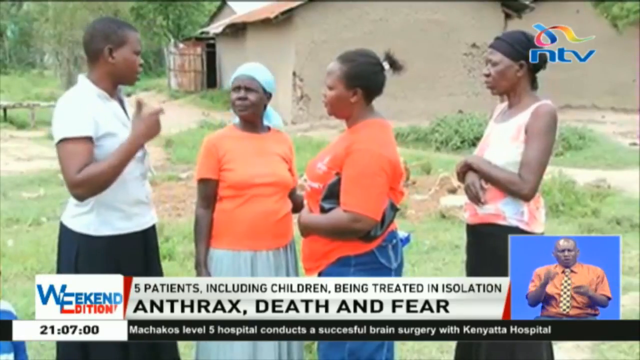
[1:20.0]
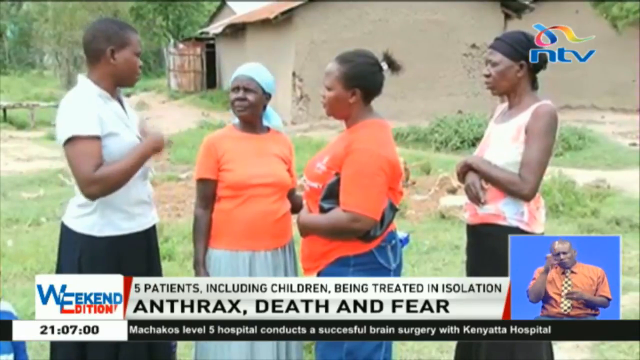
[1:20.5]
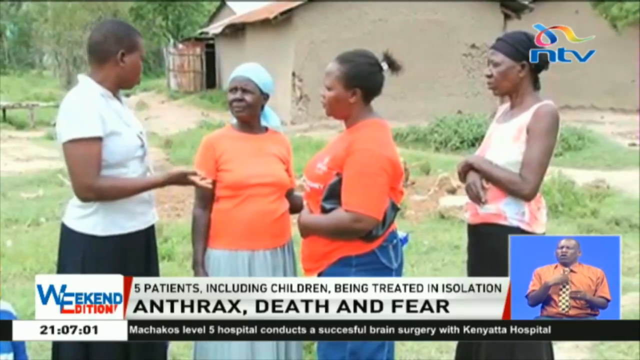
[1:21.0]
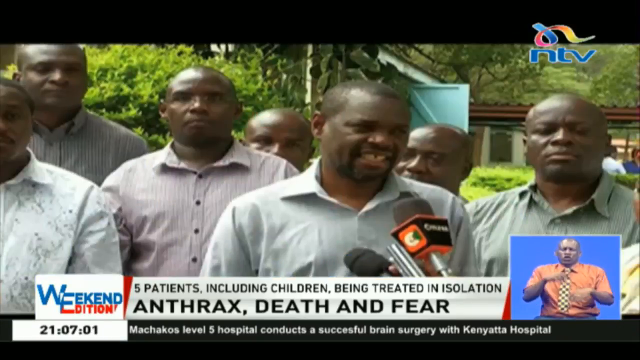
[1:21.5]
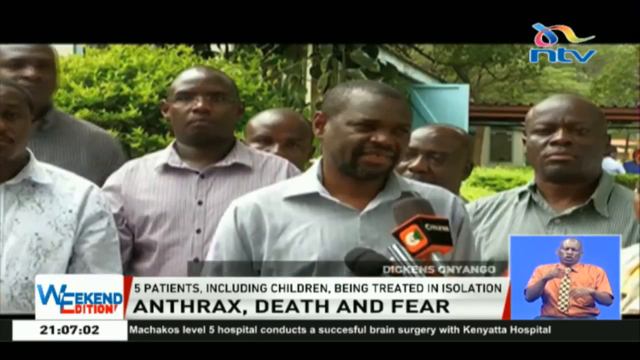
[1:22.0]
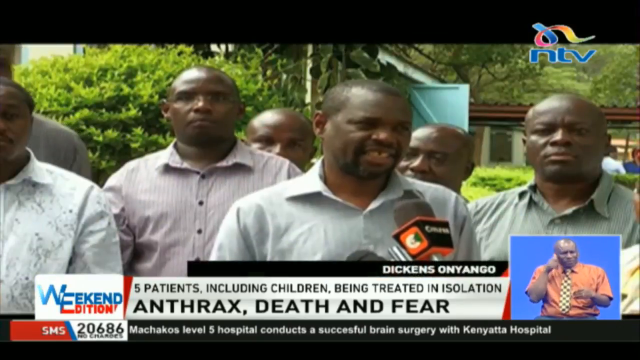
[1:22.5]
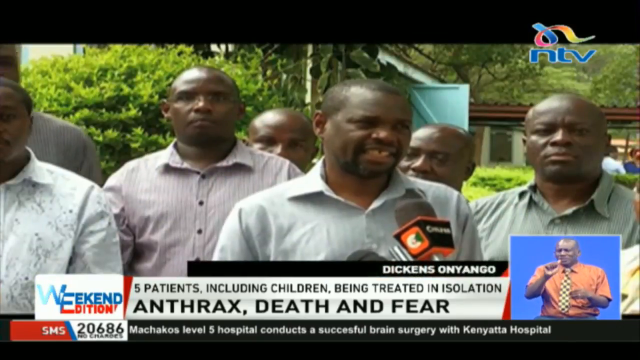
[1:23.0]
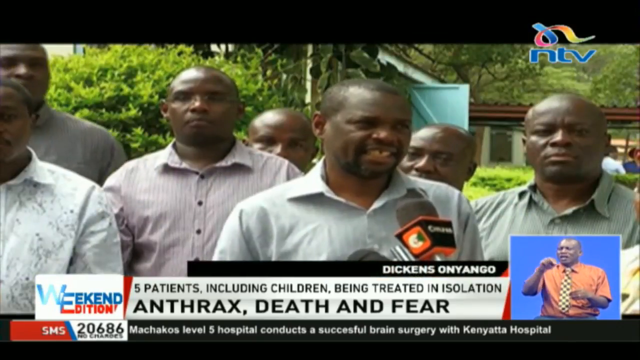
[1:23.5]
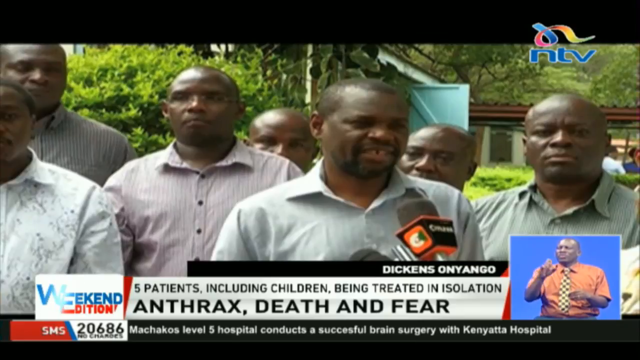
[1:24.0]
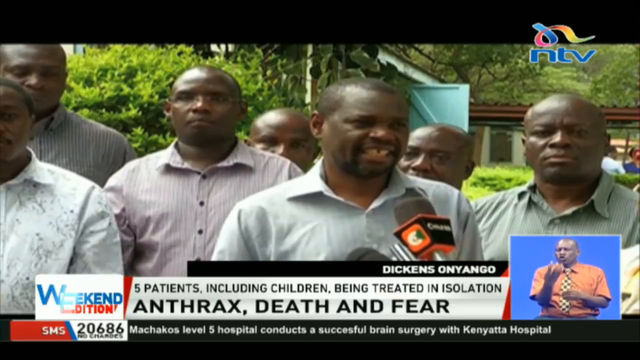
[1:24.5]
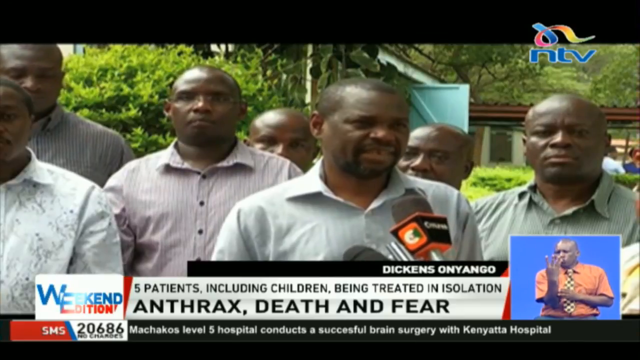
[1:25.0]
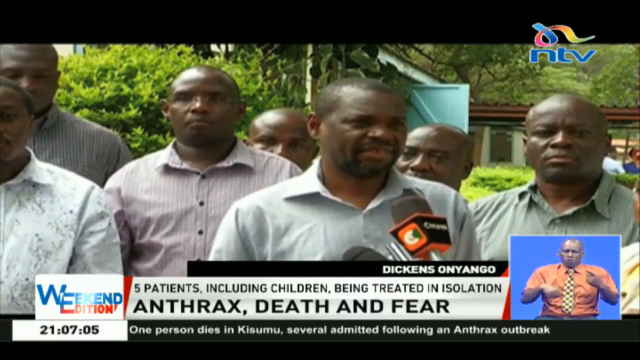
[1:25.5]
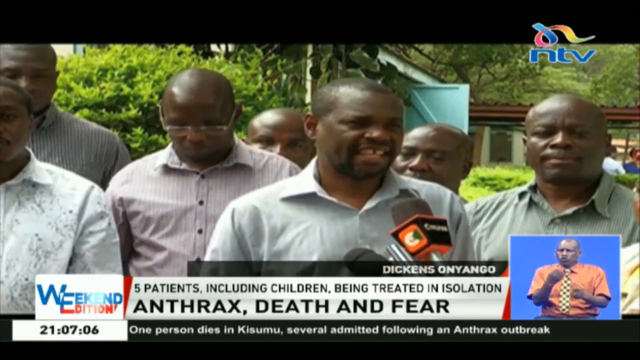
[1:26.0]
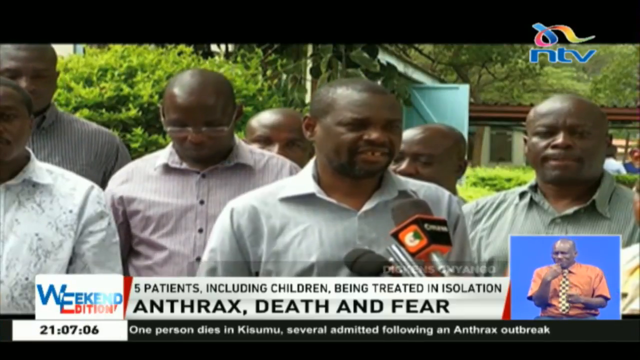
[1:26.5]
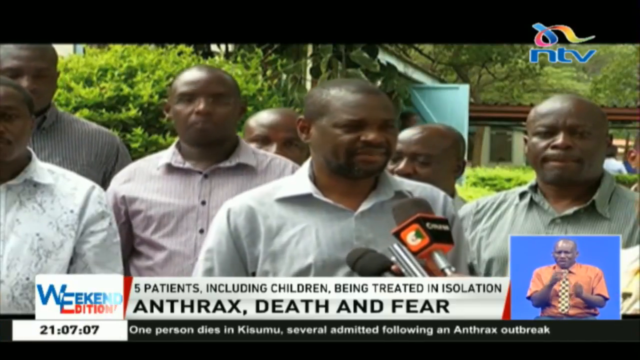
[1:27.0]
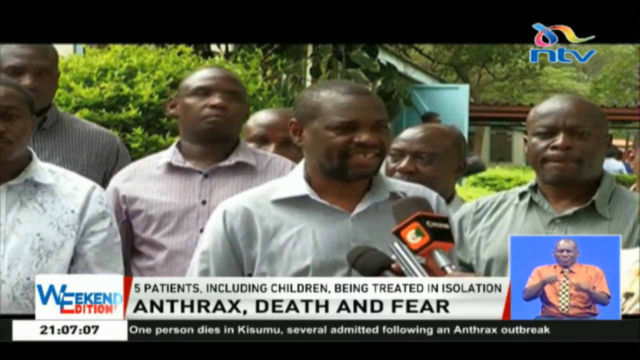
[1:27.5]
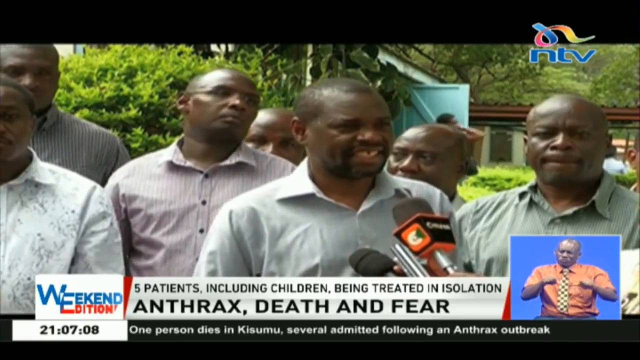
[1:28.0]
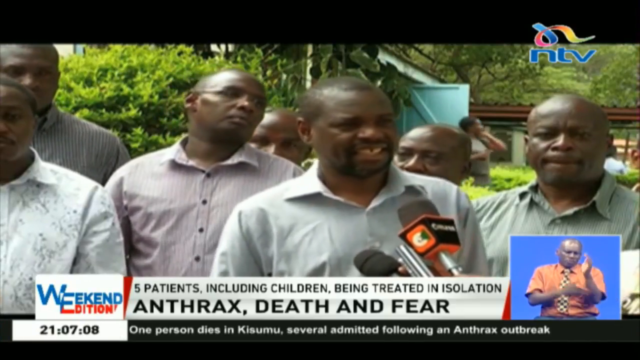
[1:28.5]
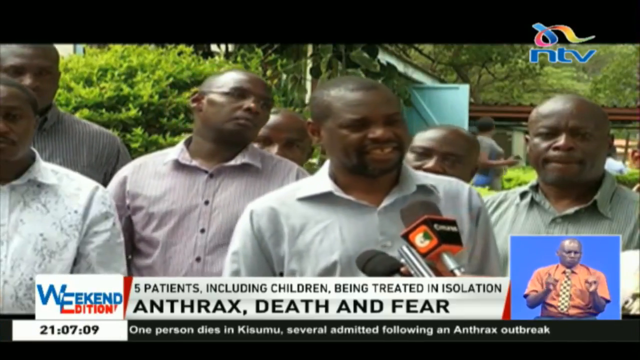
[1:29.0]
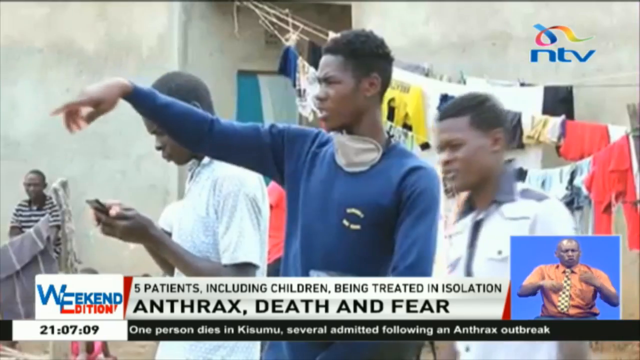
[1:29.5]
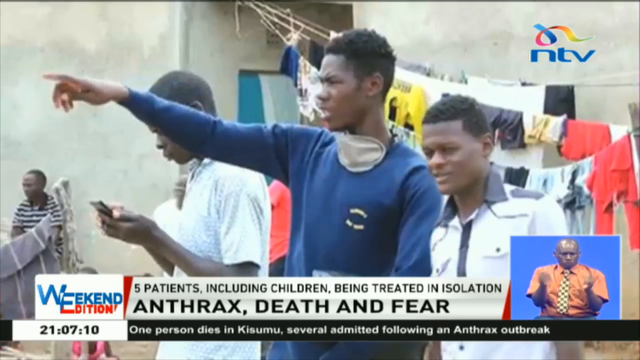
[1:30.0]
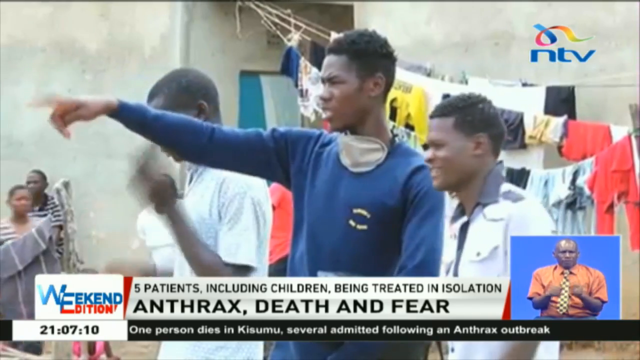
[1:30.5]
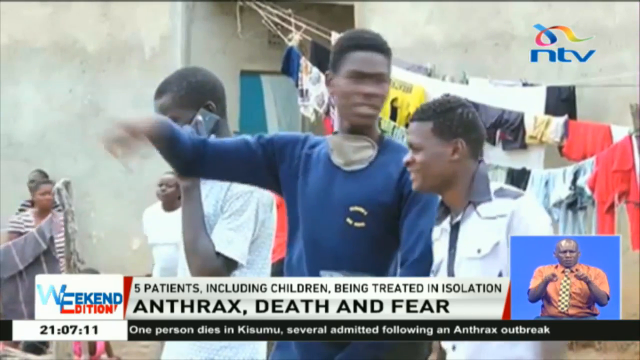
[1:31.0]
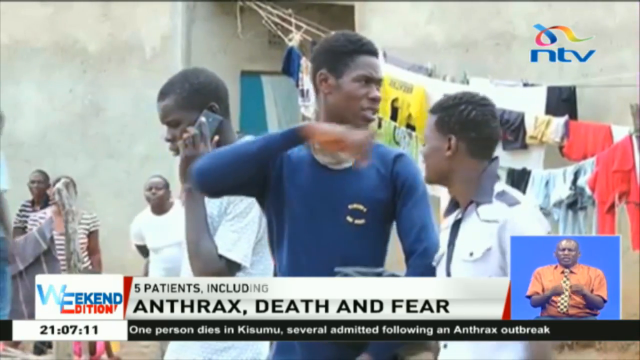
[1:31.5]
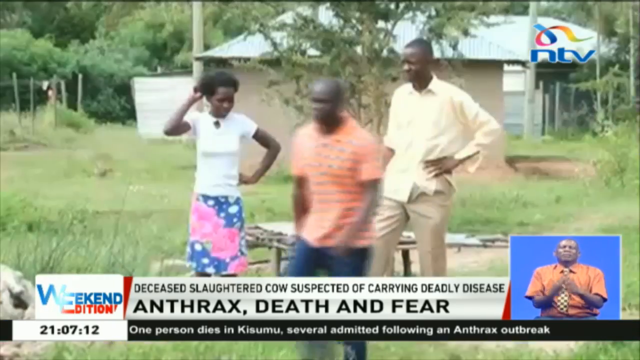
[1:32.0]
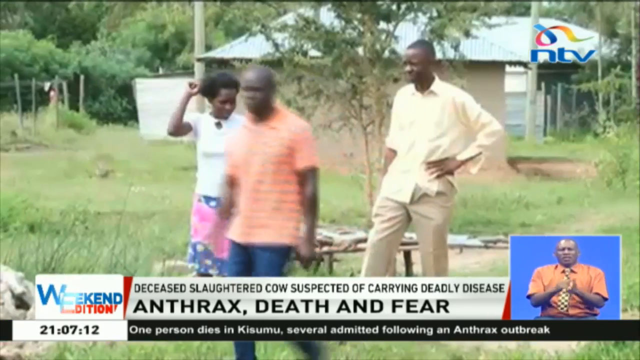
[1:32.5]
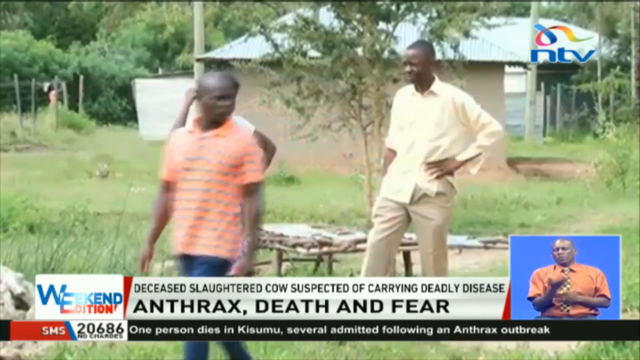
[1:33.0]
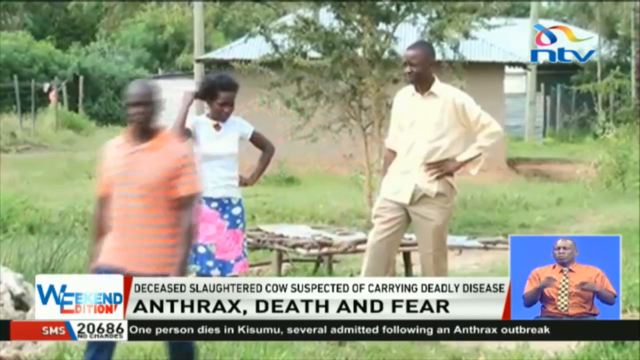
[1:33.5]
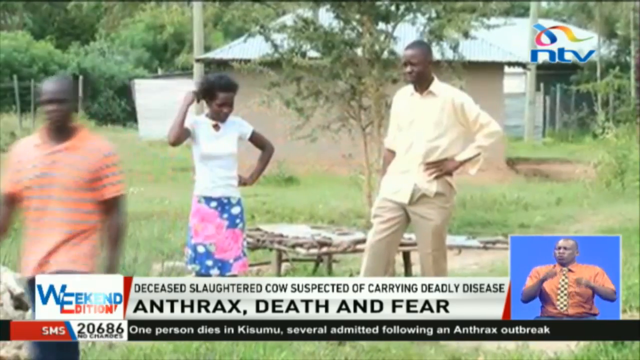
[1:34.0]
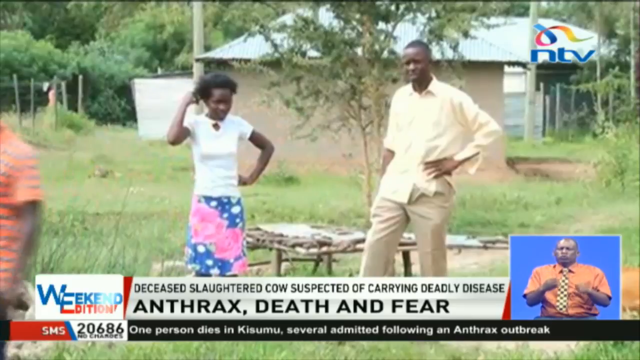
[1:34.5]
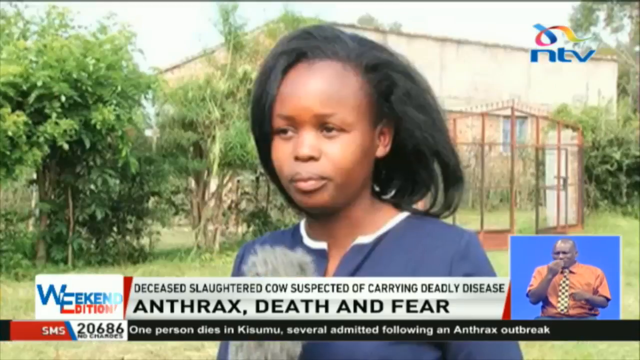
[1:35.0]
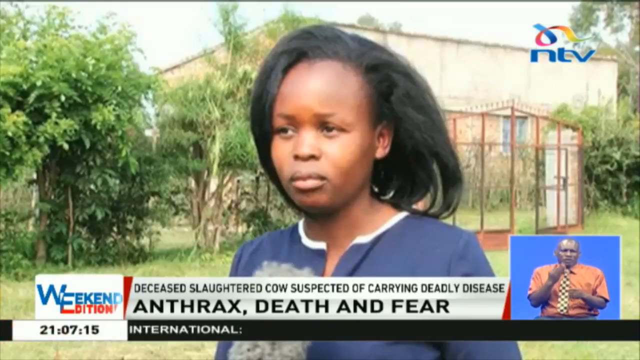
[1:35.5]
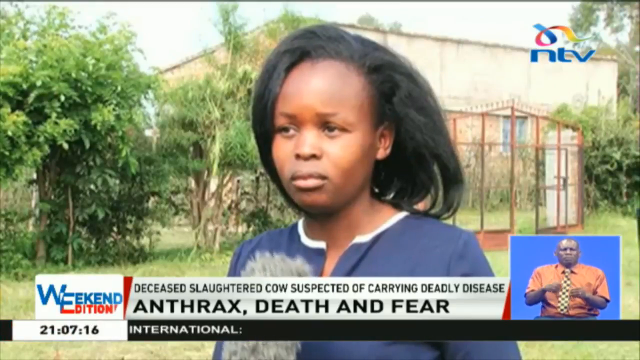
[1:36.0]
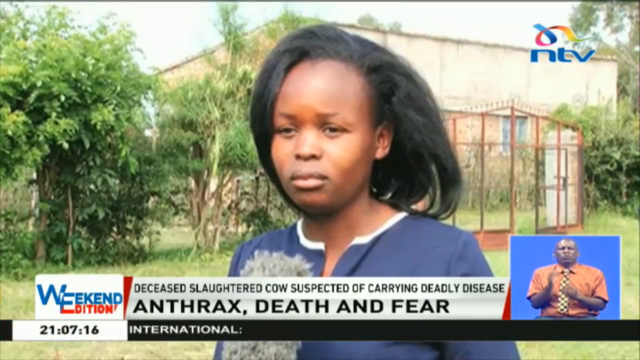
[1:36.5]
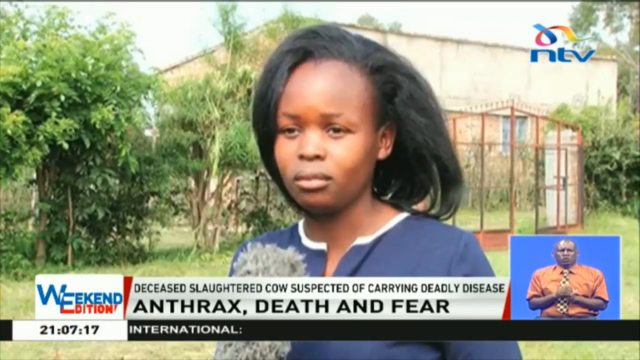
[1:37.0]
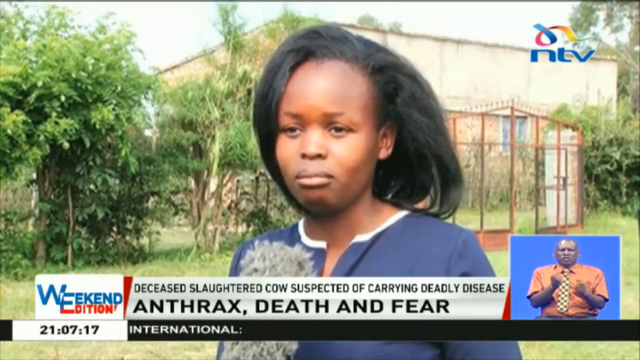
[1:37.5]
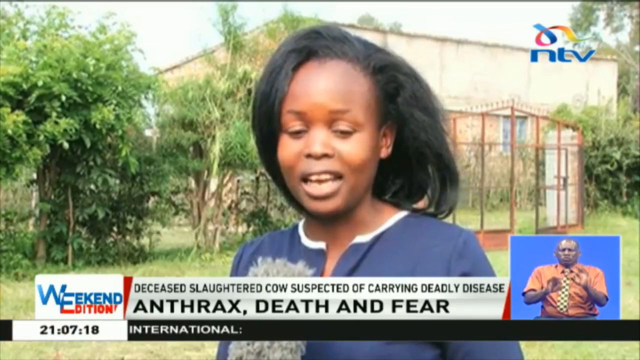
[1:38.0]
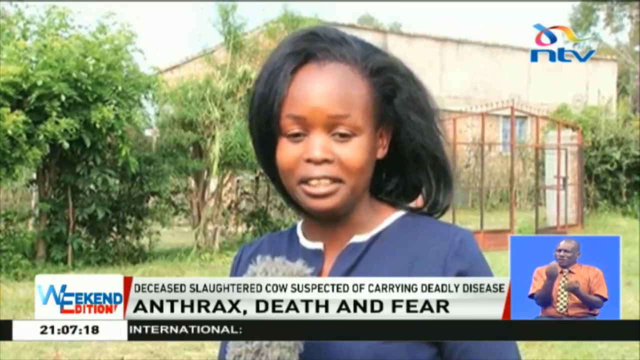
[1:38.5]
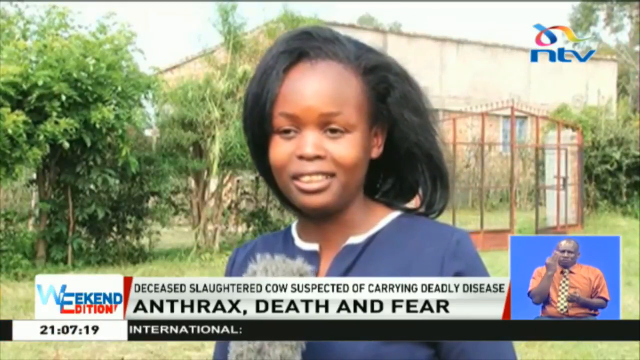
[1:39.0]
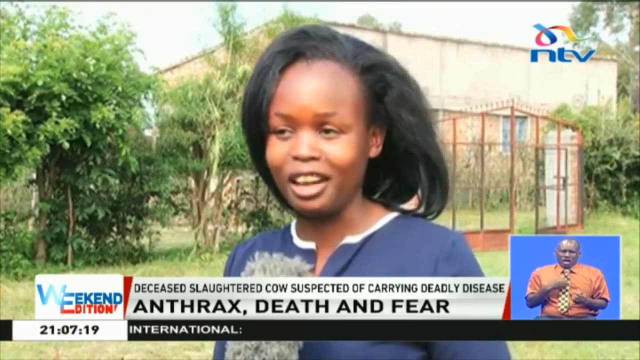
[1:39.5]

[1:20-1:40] Four older African women stand outside a small tan-colored house, talking. A group of African men, all in button-up shirts, give some kind of press conference; one man in front stands before a bunch of microphones pointed at him, and a black pop-up box below him reads "Dickens Onyango". He speaks to the reporters while the other men stand behind him and look on. In another scene, three younger African men stand outside a white concrete building, with clotheslines of colorful clothes hanging behind them. One man in a long-sleeved blue shirt points to something in front of him, then looks behind him and points to something behind him. Next, two men and one woman stand in a grassy area in front of a small tan house; one of the men kind of walks to the left while the others stand there. A young woman with shoulder-length black hair is then interviewed; she has kind of a serious look at first and then breaks into a smile. A white rectangular box at the bottom of the screen reads in black text "deceased slaughtered cow suspected of carrying deadly disease", with "anthrax, death, and fear" underneath.